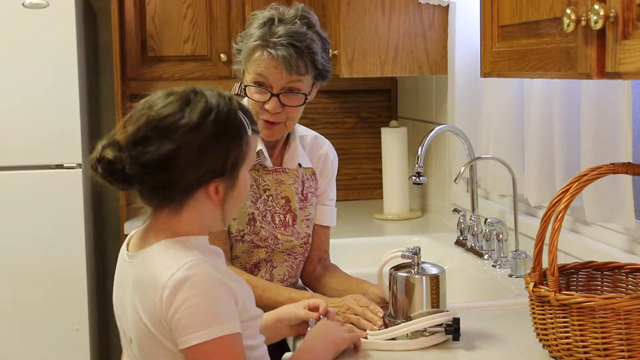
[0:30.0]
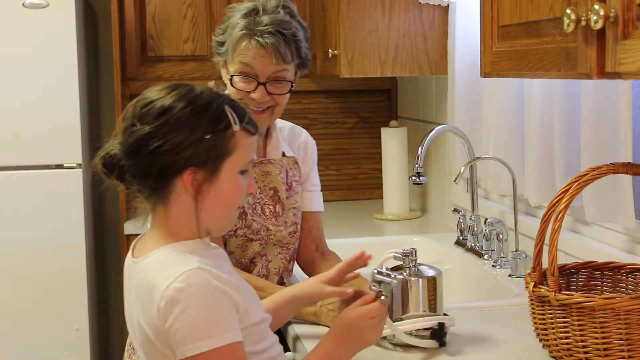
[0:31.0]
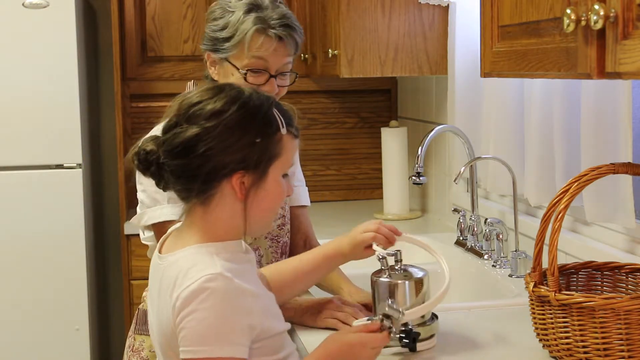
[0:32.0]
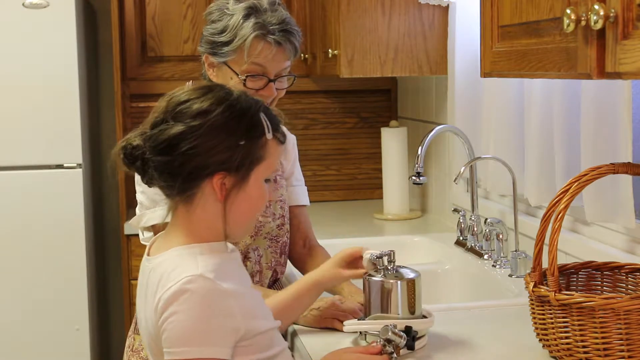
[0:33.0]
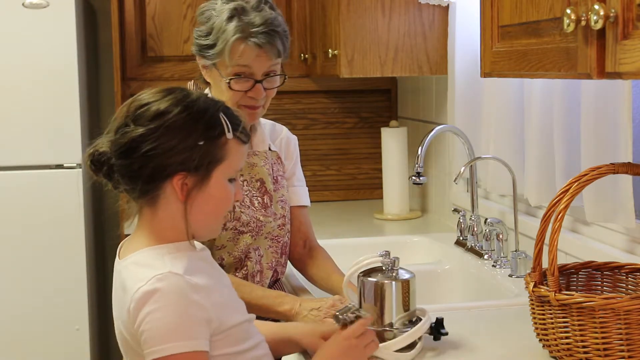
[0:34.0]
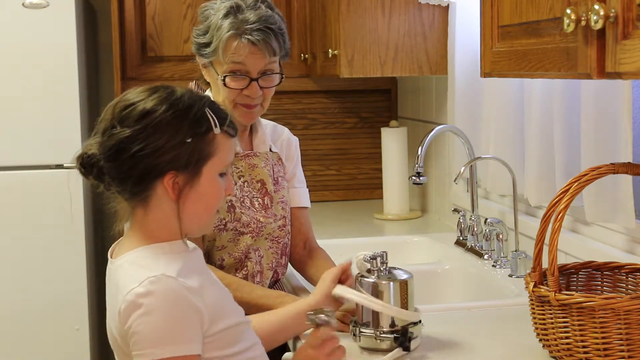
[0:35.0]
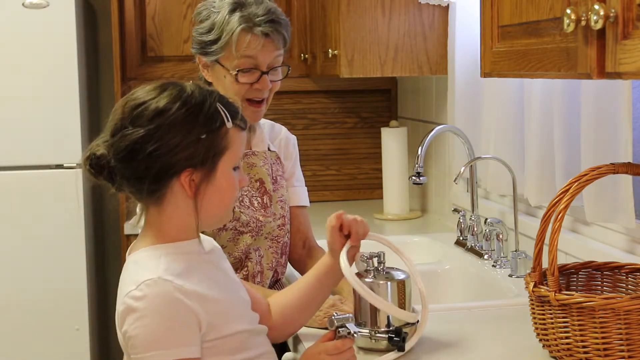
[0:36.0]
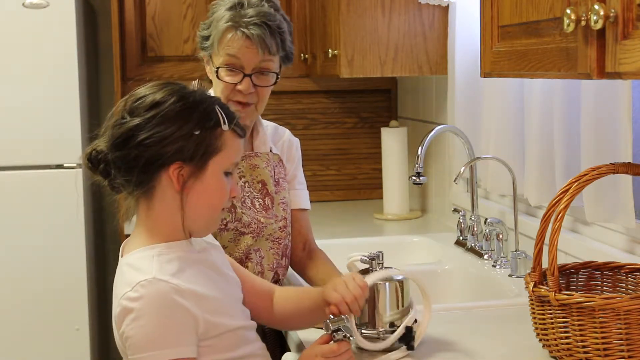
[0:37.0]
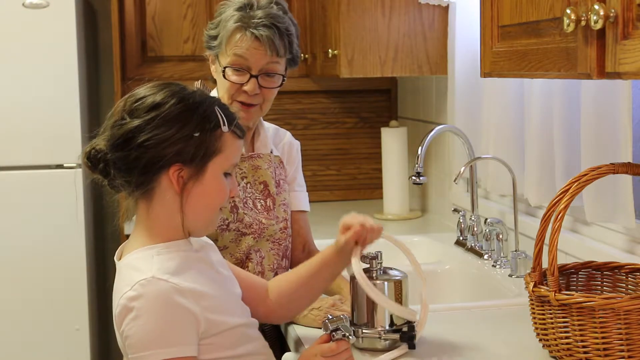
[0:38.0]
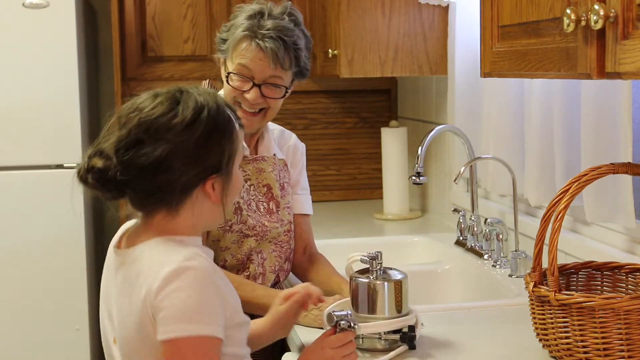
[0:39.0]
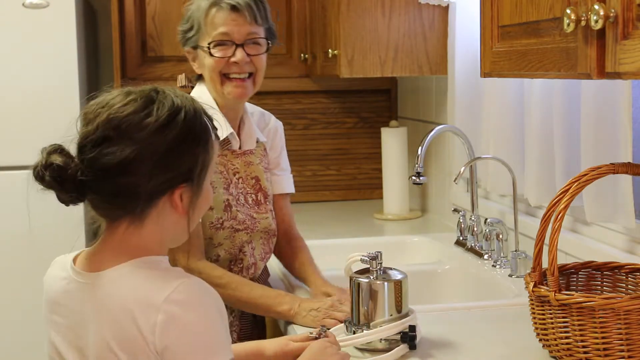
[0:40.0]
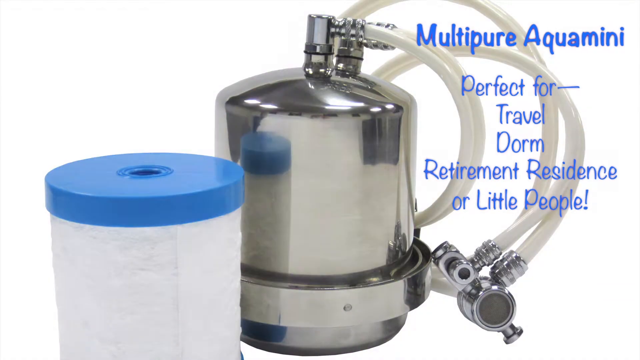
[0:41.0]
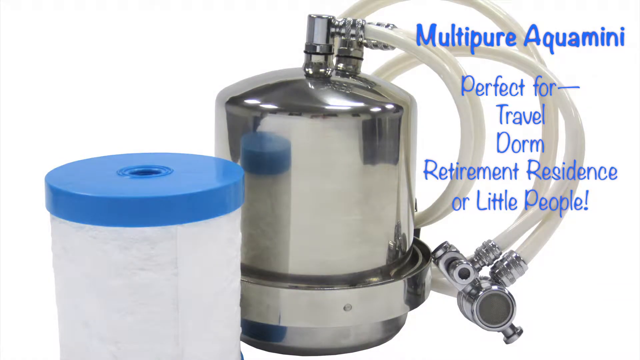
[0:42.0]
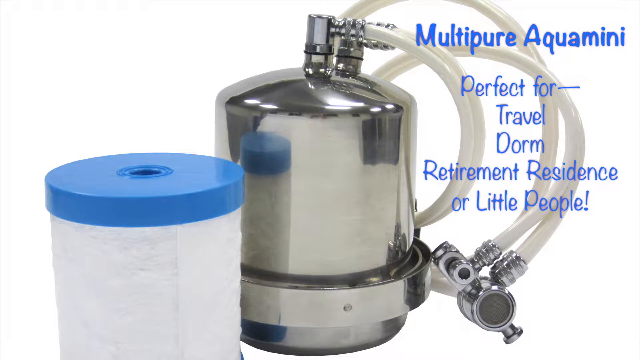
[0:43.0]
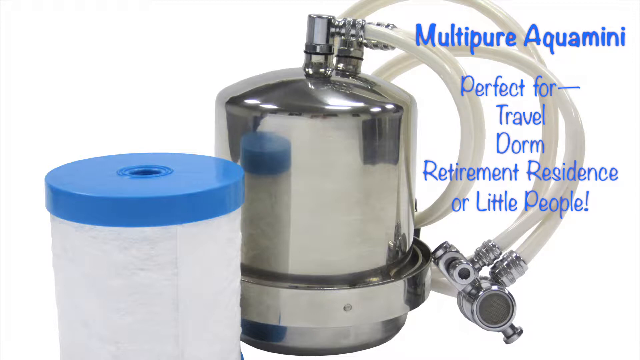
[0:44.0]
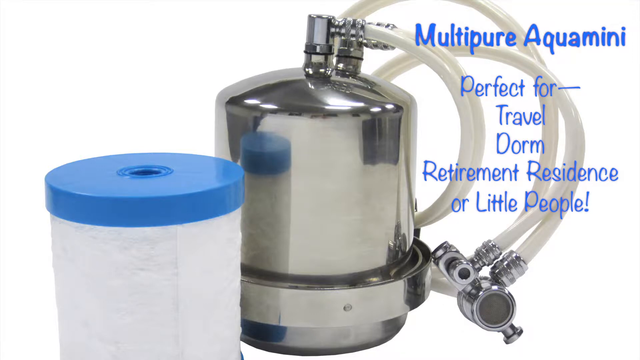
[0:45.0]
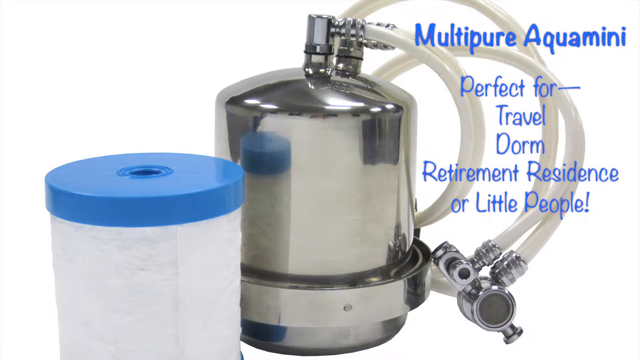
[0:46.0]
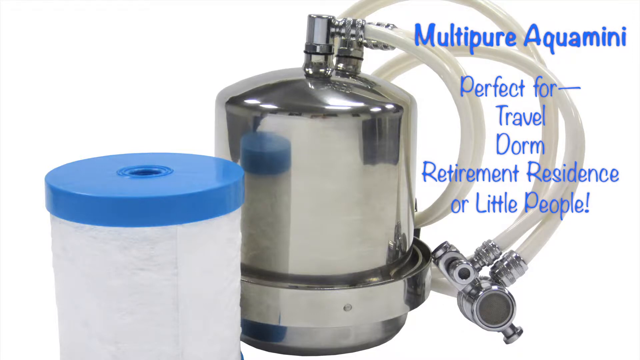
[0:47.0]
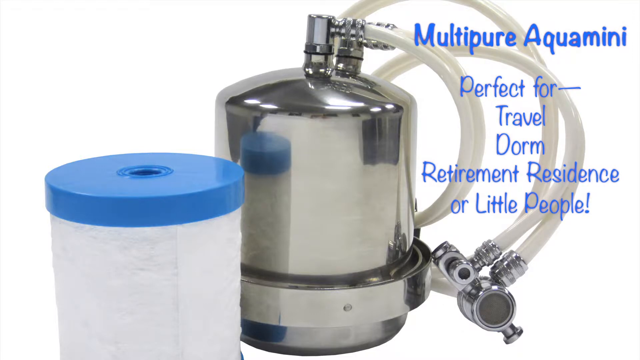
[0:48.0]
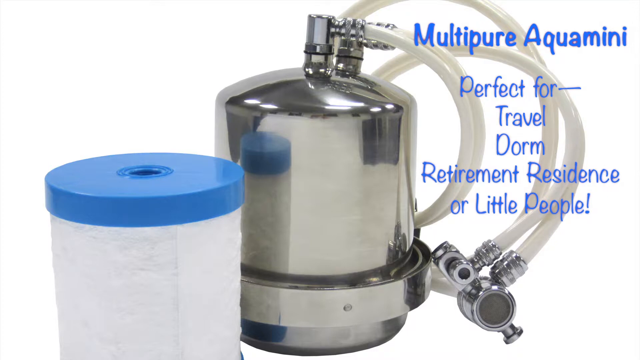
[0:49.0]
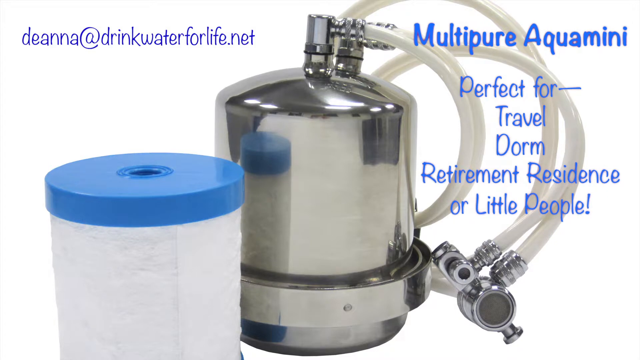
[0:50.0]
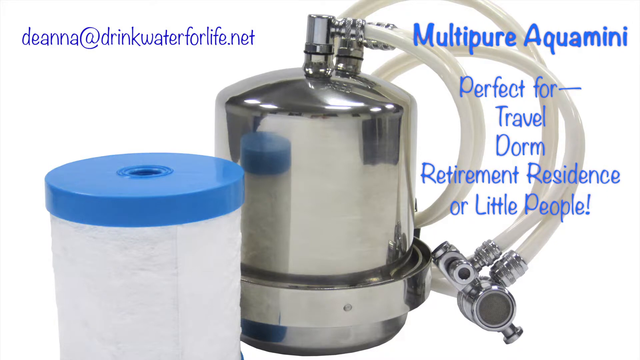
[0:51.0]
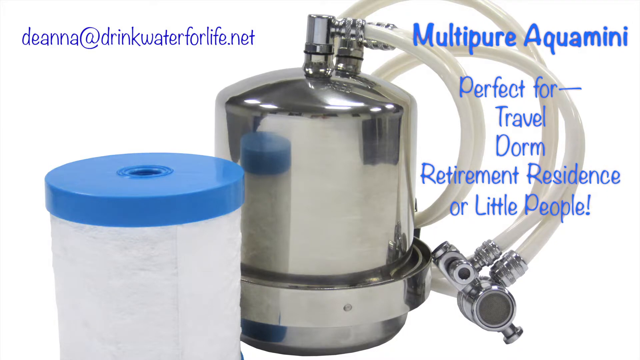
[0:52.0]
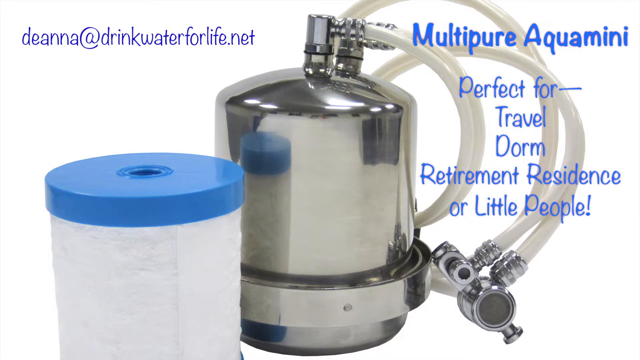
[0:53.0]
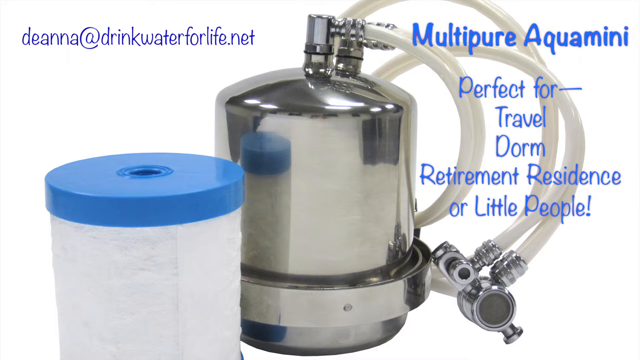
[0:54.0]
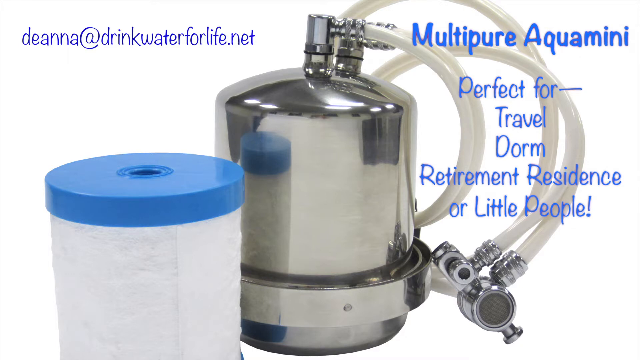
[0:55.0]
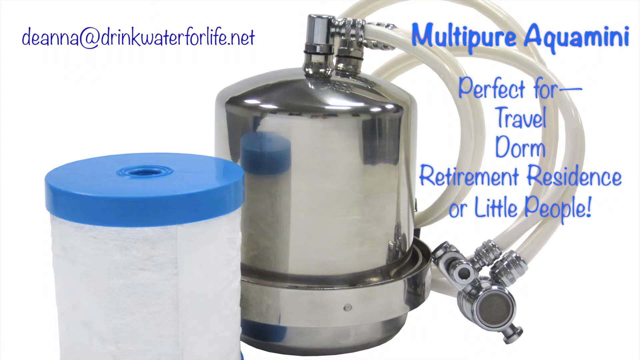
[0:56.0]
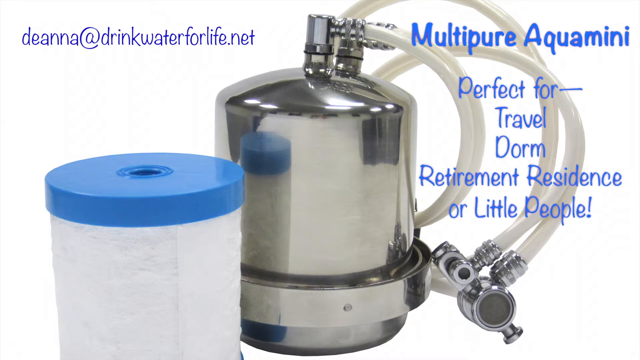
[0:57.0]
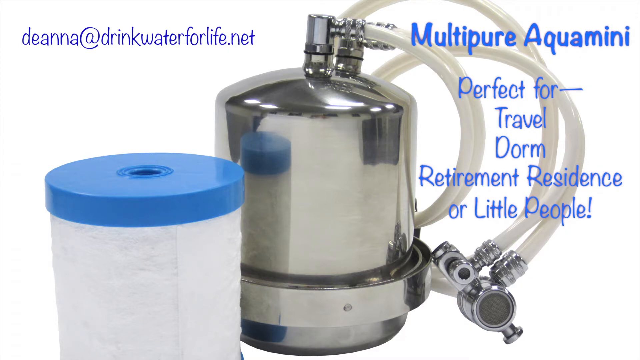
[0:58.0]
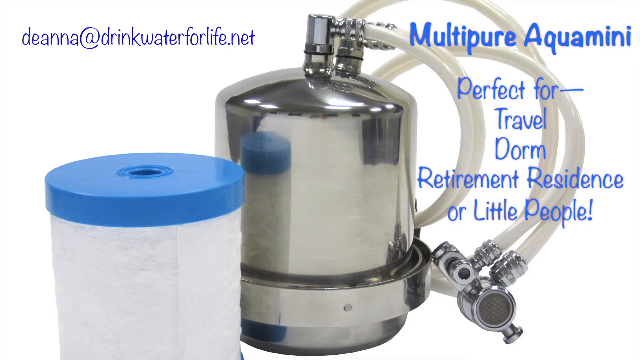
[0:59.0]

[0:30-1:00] The young girl listens attentively to the older woman, who is perhaps giving her some information. The girl uses her left hand to pick up the silver piece of equipment and her right hand to hold the tool or attachment running from it. She turns the equipment all around, fiddling and playing with it. Her grandmother then looks at her and jokingly says something that makes both of them laugh. At the end of the video, the equipment is identified as a Multi-Pure Aqua Mini, described as perfect for travel, dorm, retirement residence, or little people.